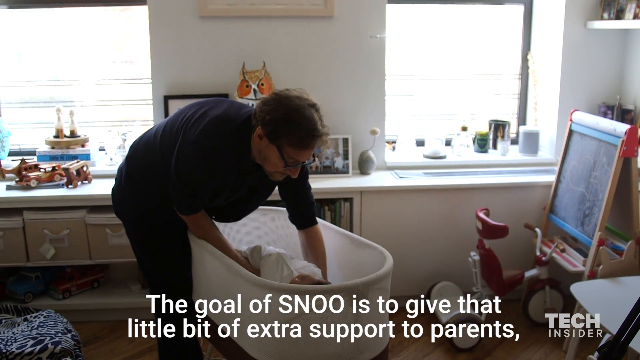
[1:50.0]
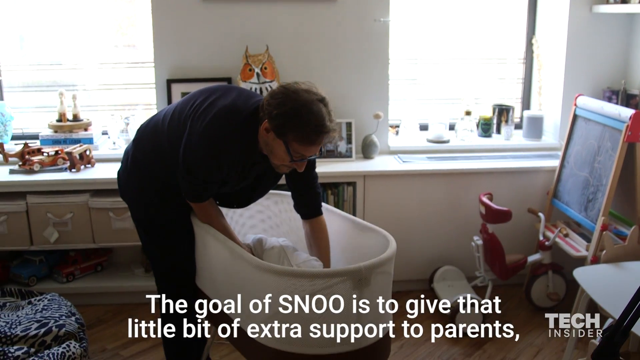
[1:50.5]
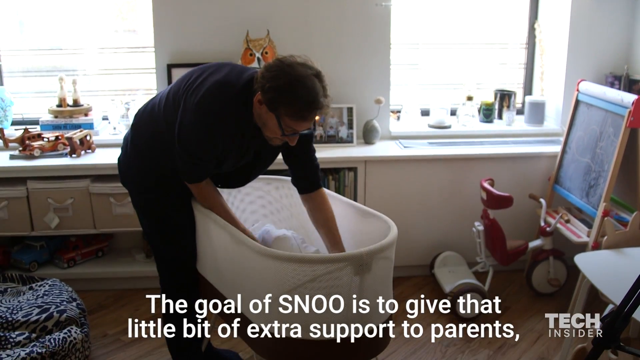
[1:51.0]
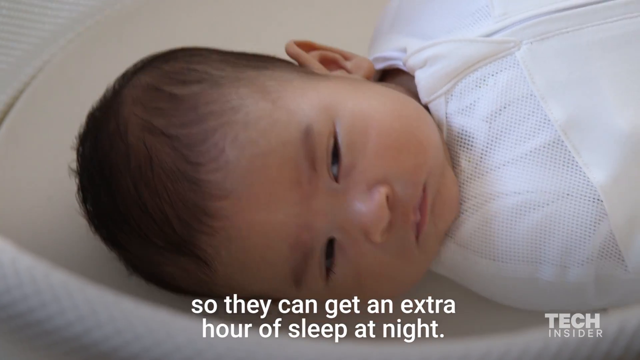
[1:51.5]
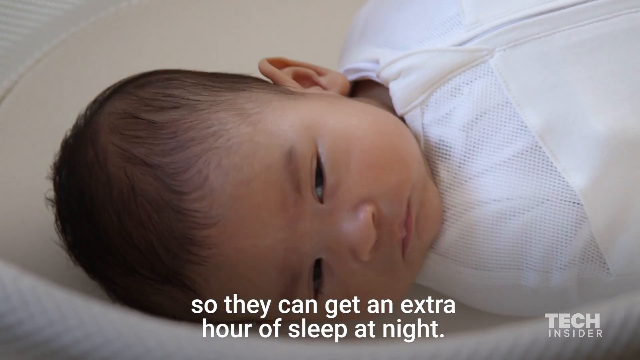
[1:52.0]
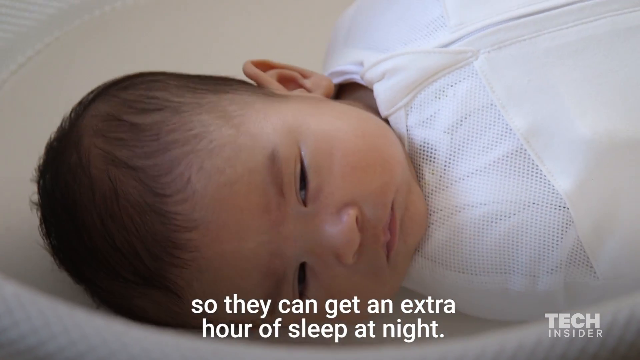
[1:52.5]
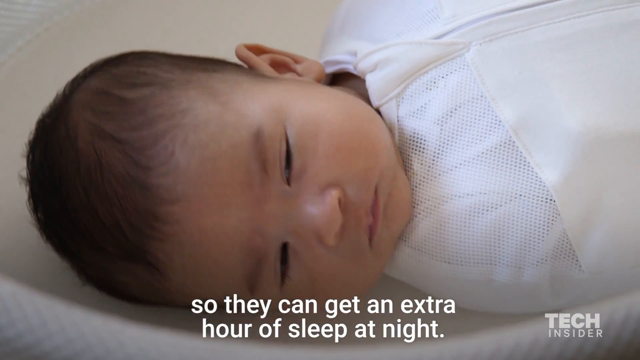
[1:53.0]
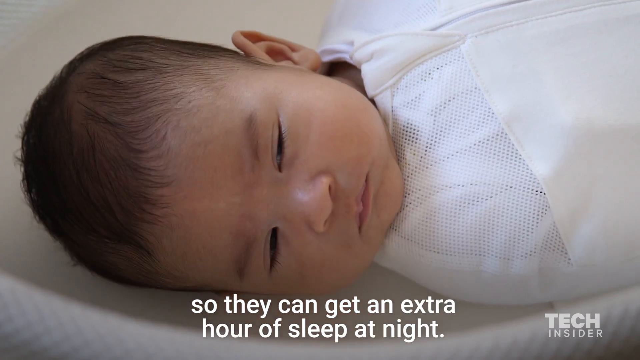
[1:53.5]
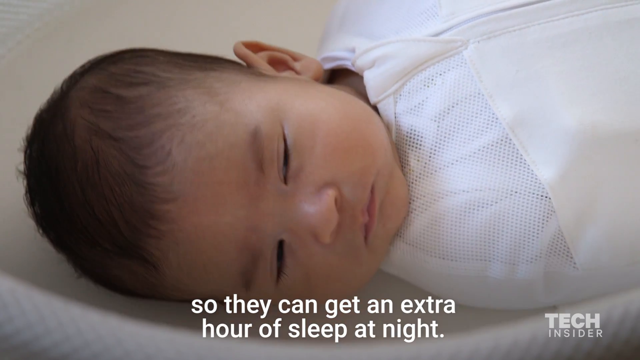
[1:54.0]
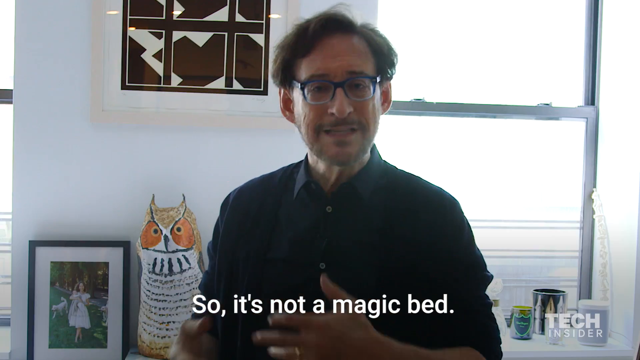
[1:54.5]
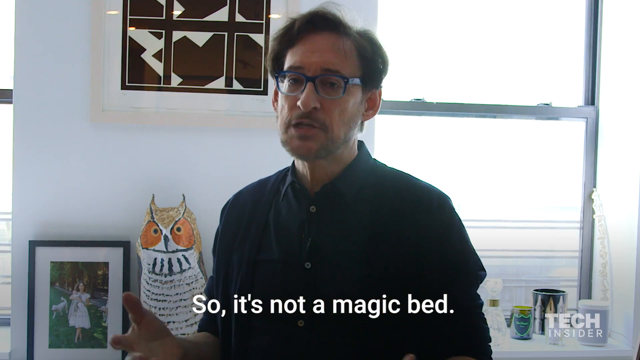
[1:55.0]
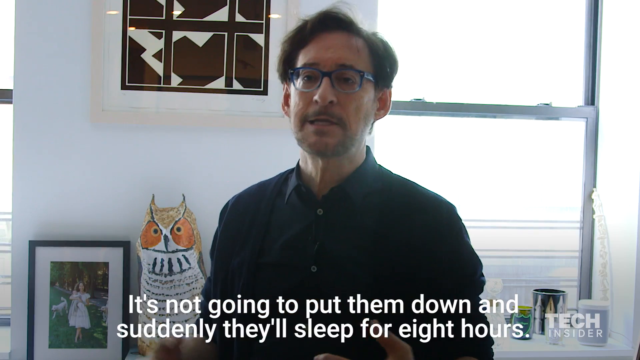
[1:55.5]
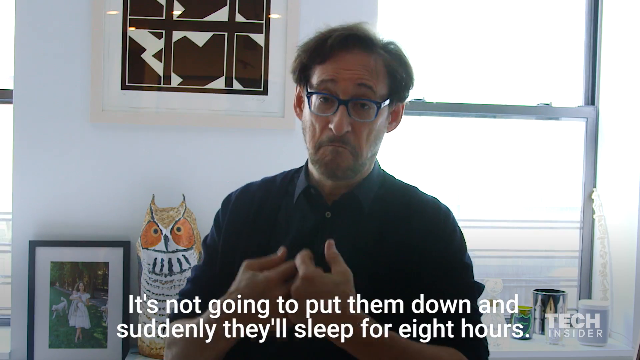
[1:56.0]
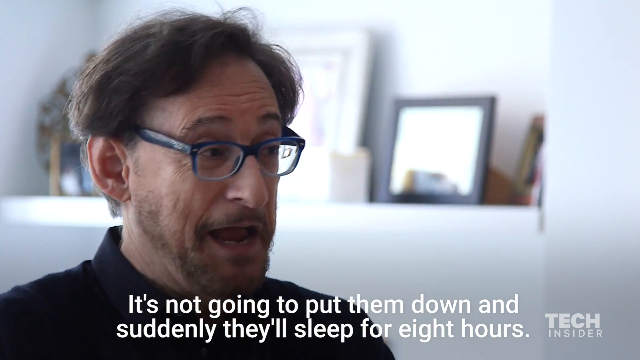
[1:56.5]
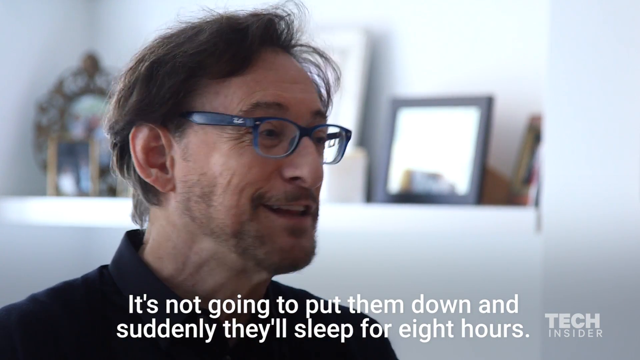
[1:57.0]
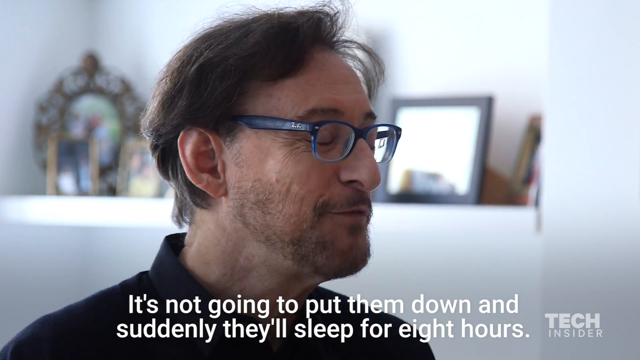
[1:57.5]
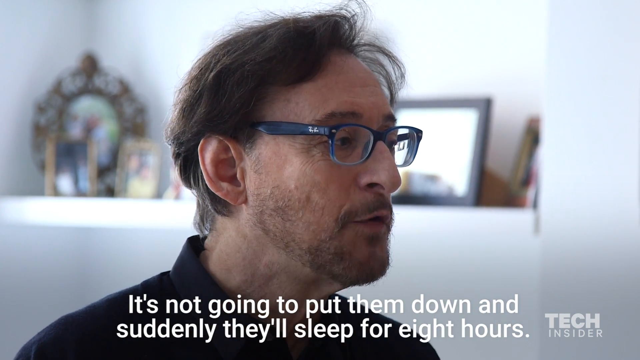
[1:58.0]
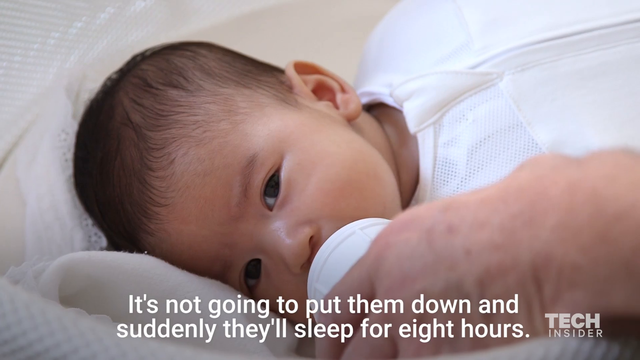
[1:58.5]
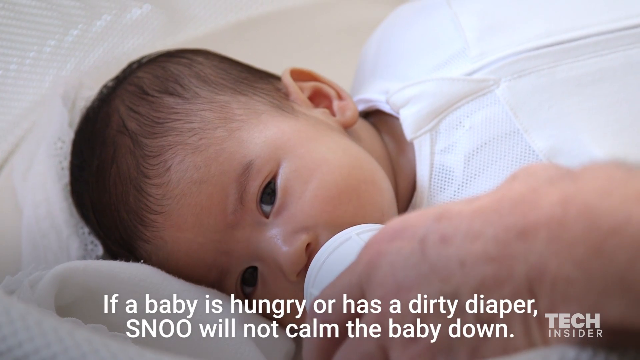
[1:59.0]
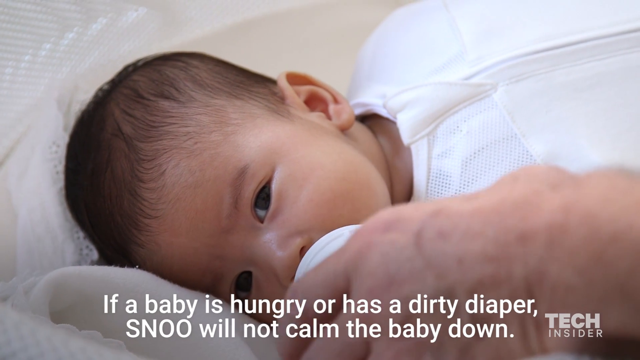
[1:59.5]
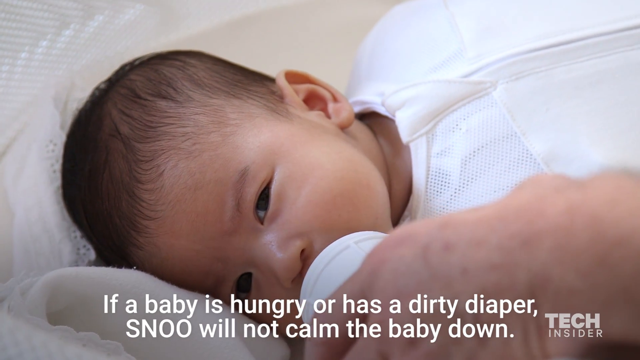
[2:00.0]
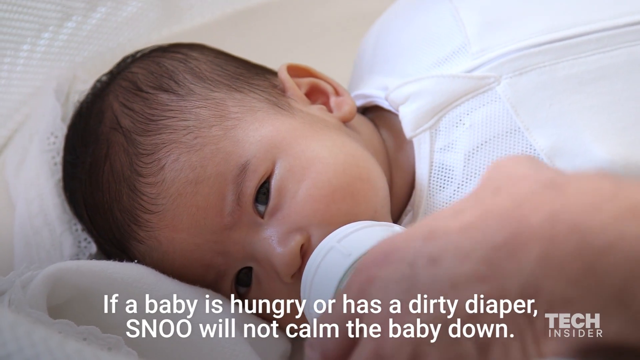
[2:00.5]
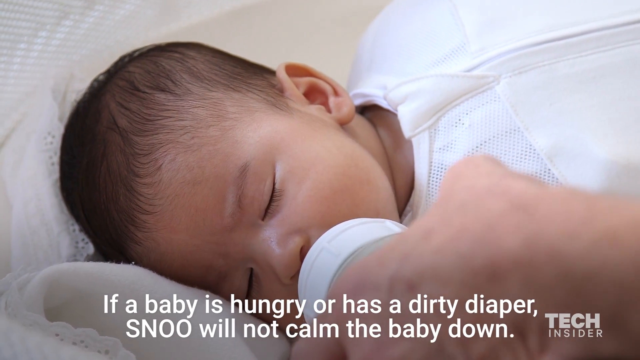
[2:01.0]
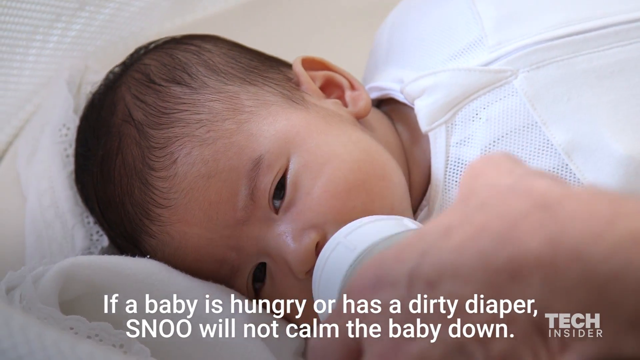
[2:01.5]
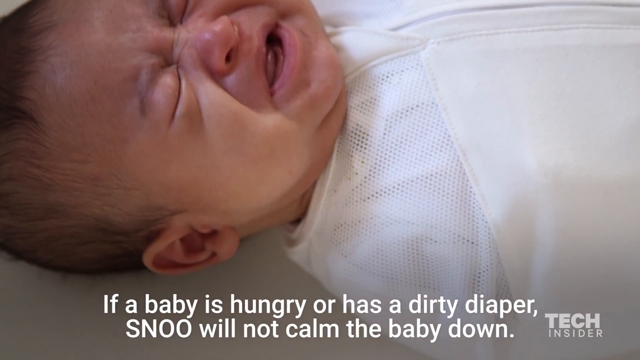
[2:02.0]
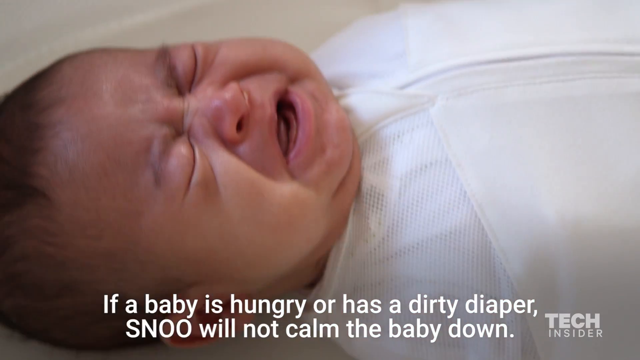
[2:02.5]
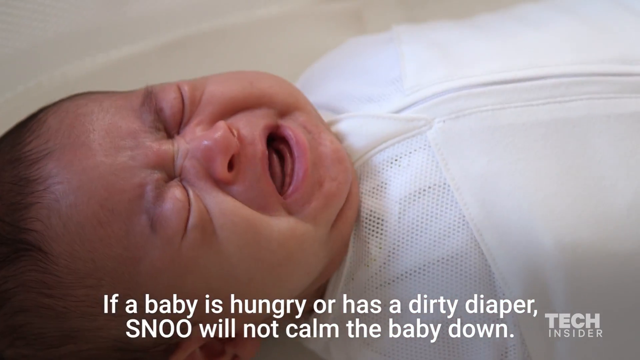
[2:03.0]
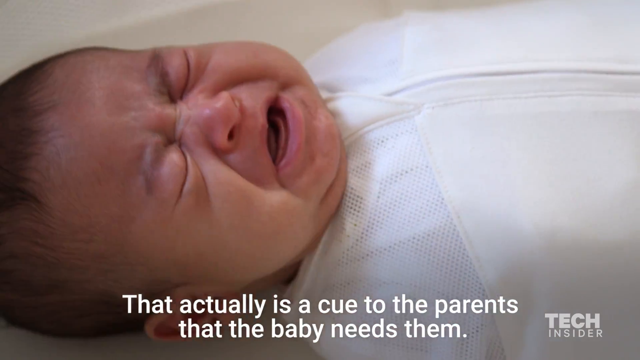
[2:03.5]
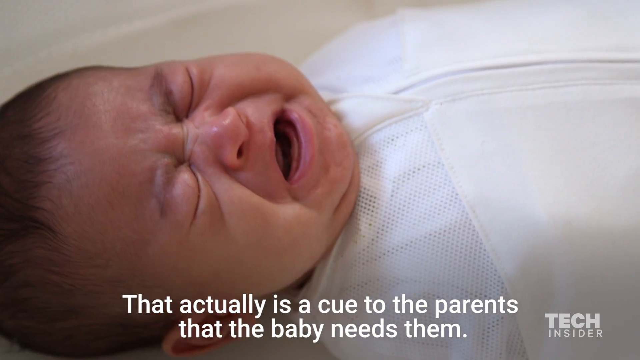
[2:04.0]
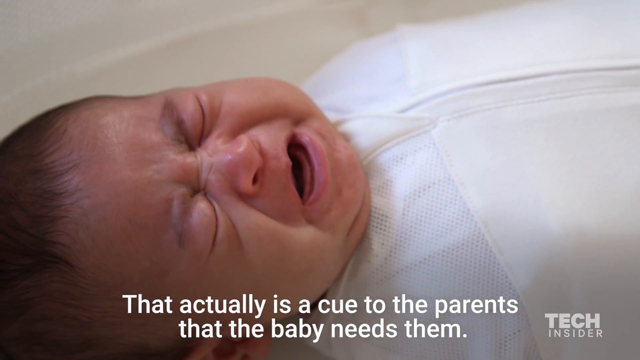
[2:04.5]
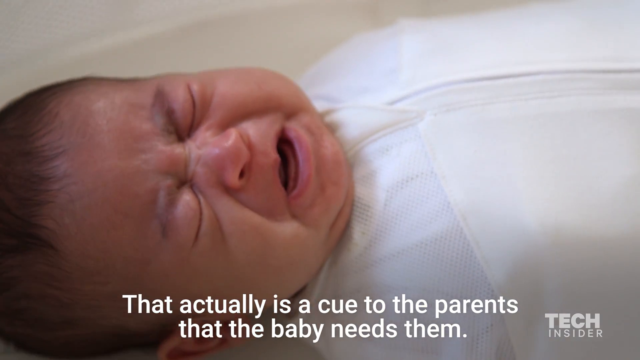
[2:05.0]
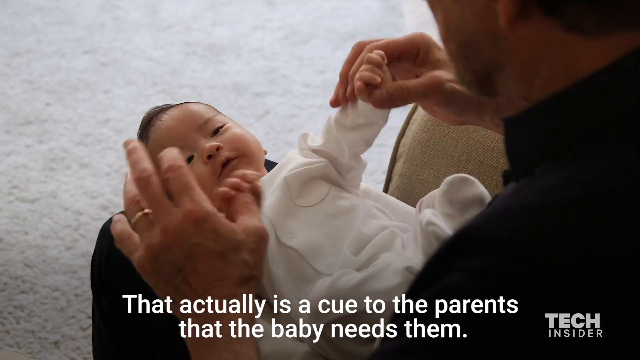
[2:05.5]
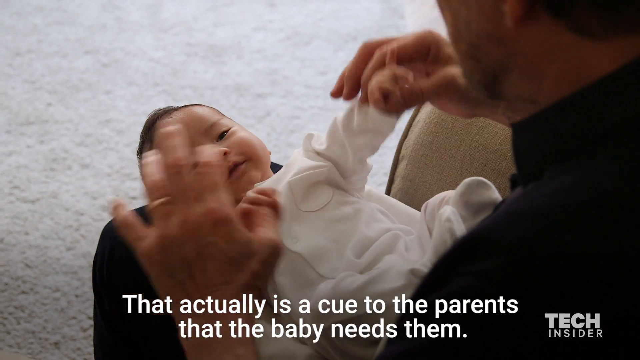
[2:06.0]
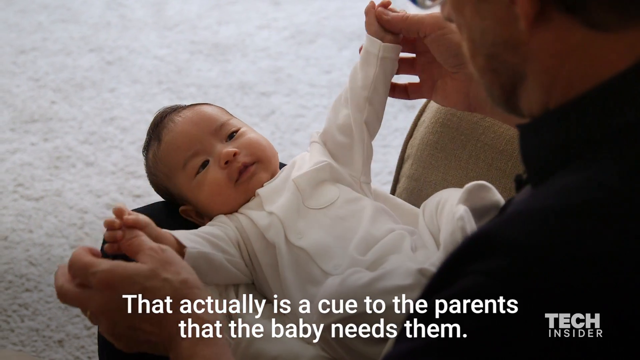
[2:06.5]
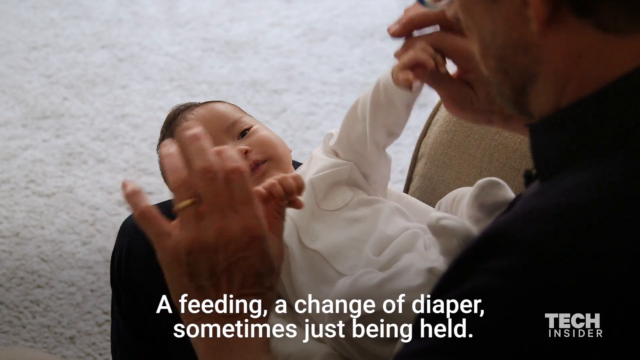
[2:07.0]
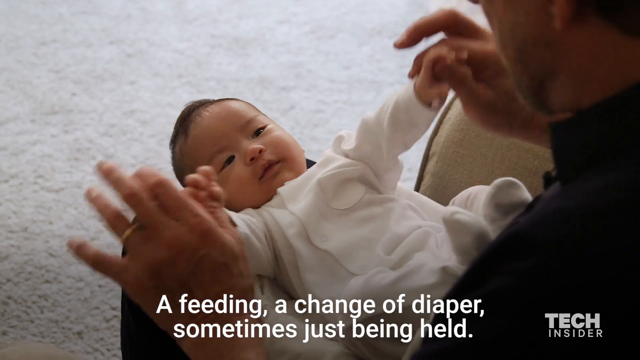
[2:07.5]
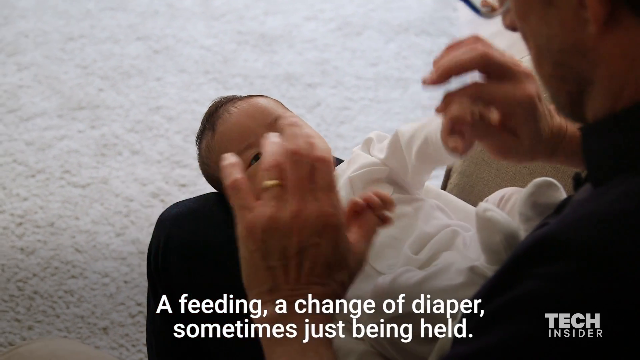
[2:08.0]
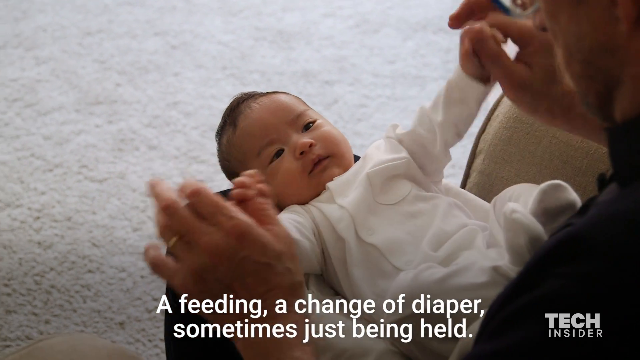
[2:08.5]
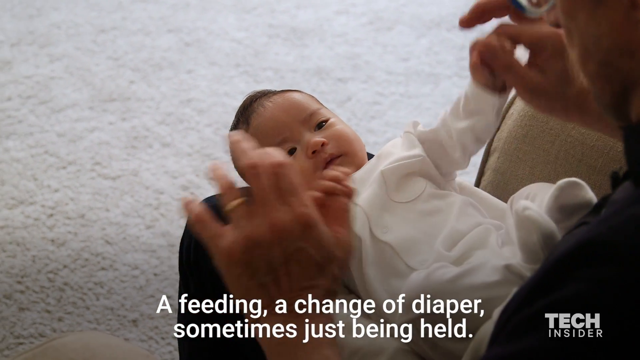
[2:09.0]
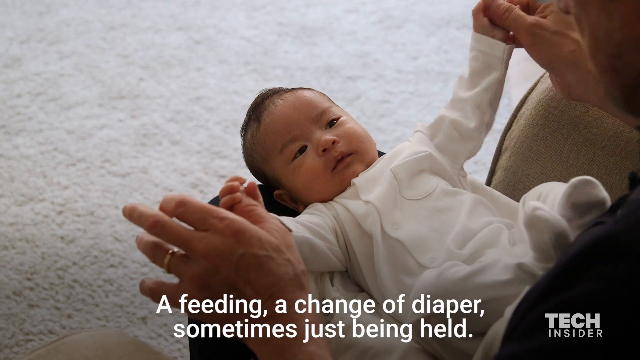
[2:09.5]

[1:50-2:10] A baby rocks back and forth inside a crib. A bottle is handed to the baby, the baby then appears to cry, and then the baby appears very playful, moving his hands back and forth while staring at a Caucasian man who talks to the baby. The man wears glasses that appear to be from Ray-Ban and talks straight to the camera. A plastic owl is in the background of what appears to be the man's house. It is broad daylight outside, with bright light shining through the windows in the background.